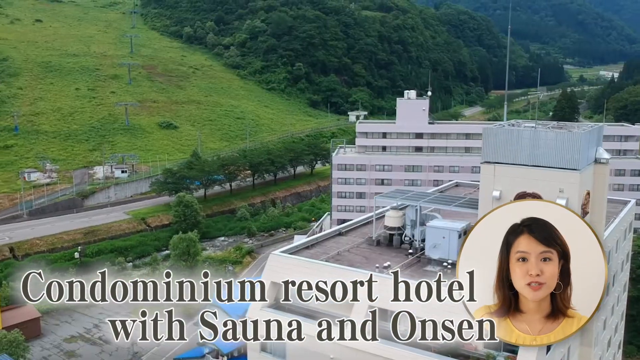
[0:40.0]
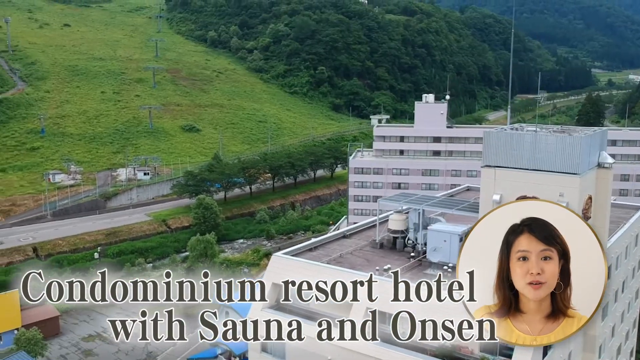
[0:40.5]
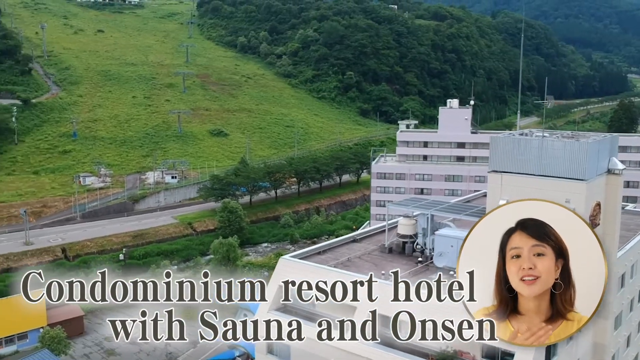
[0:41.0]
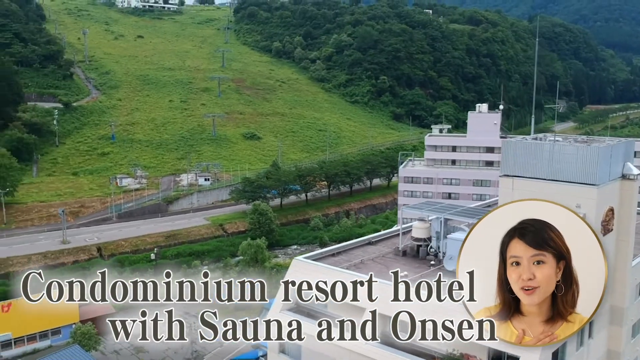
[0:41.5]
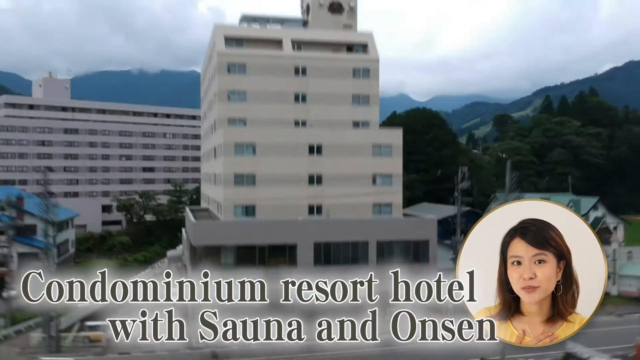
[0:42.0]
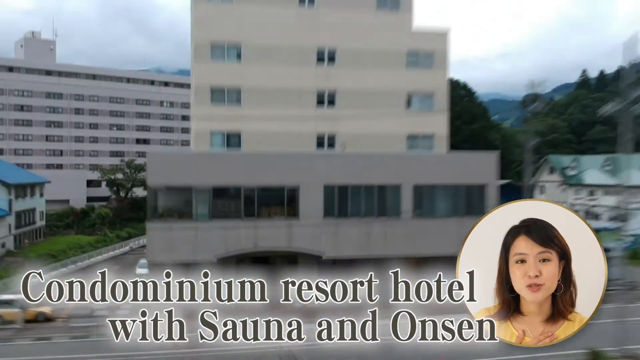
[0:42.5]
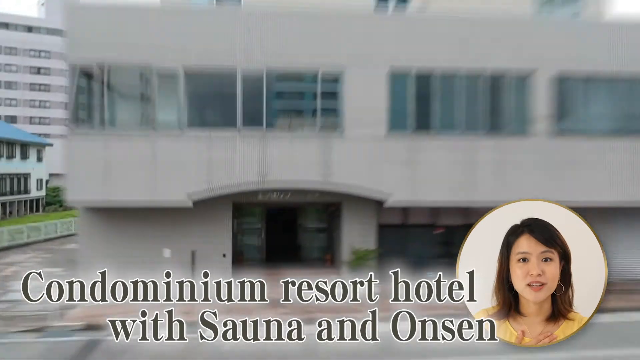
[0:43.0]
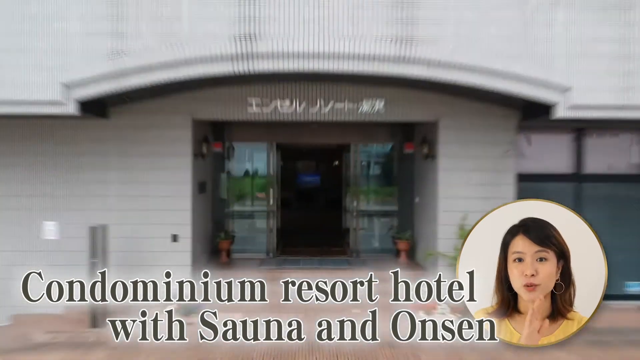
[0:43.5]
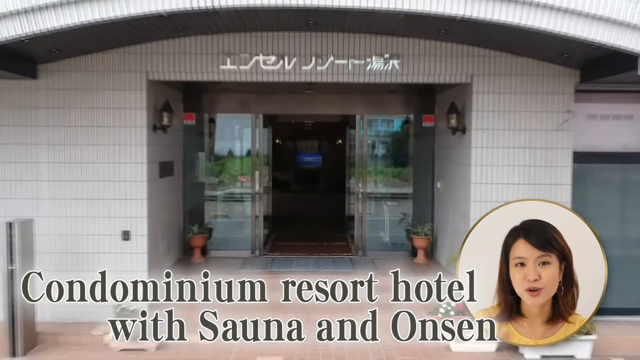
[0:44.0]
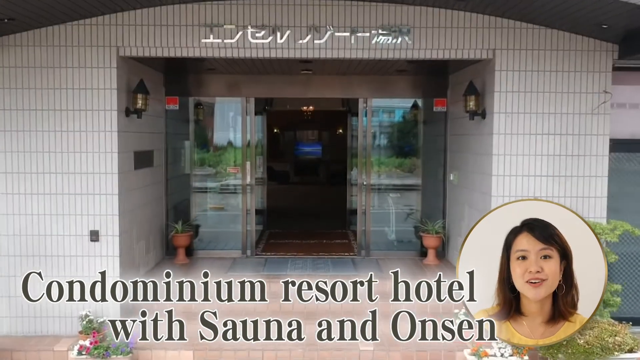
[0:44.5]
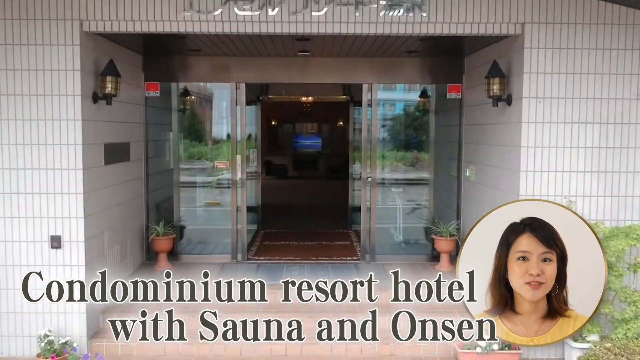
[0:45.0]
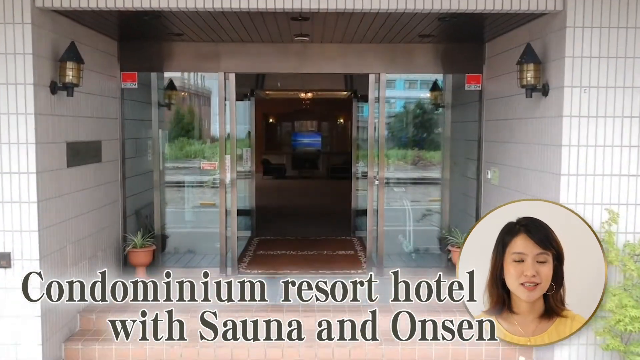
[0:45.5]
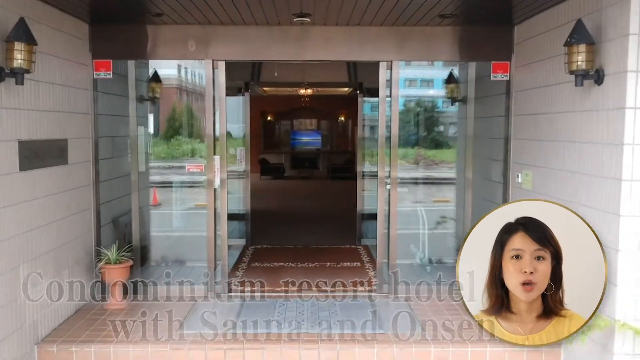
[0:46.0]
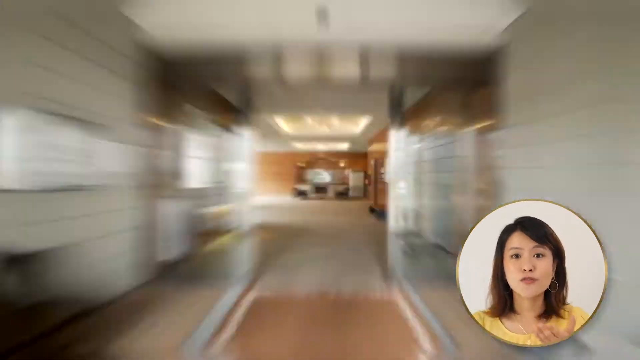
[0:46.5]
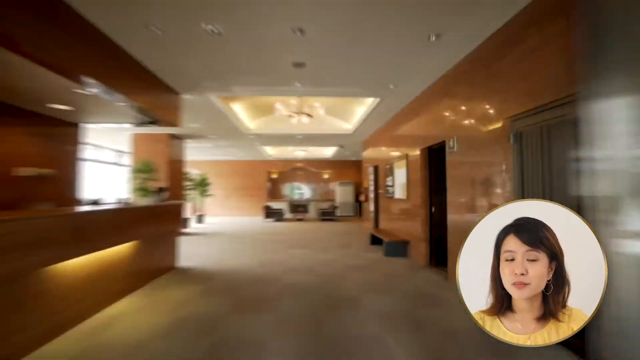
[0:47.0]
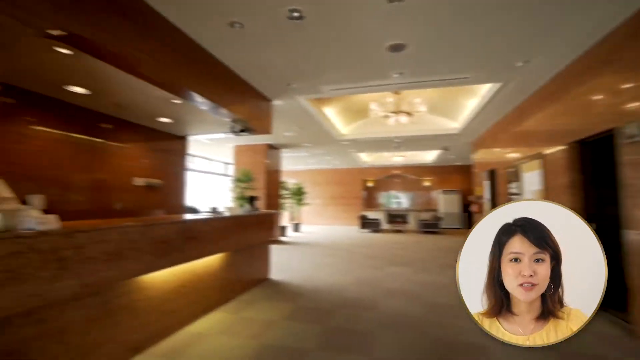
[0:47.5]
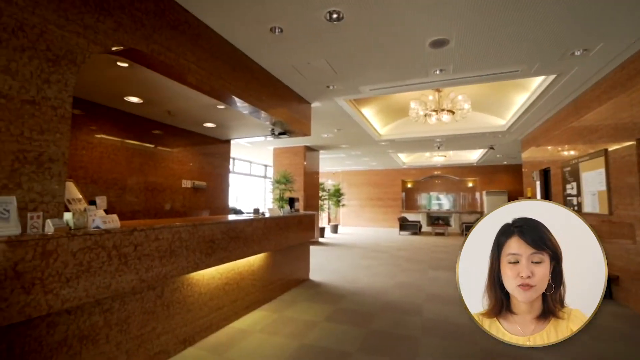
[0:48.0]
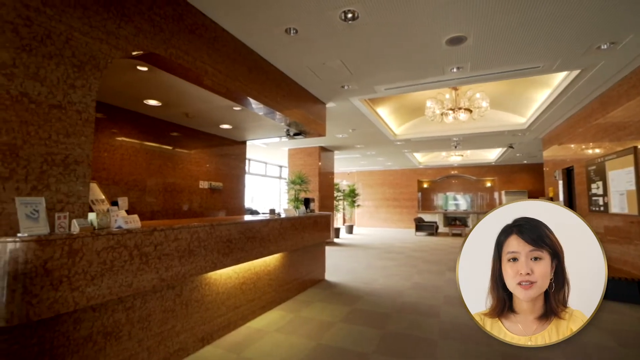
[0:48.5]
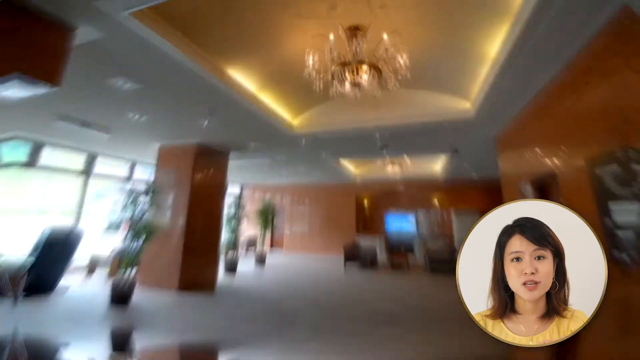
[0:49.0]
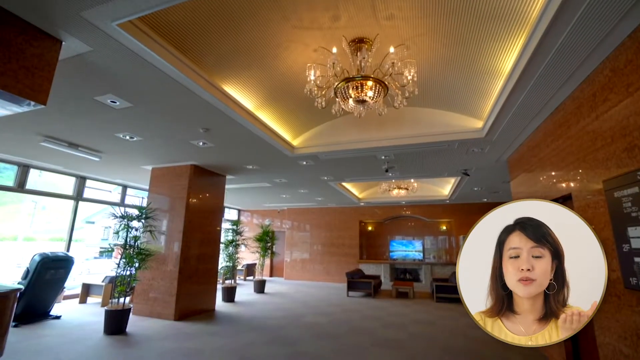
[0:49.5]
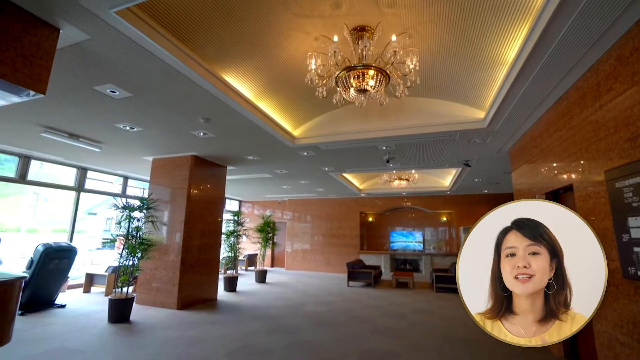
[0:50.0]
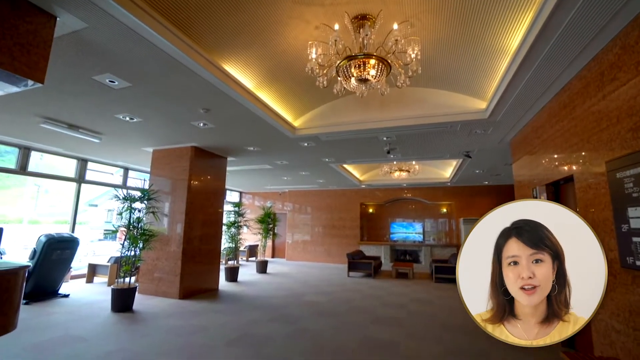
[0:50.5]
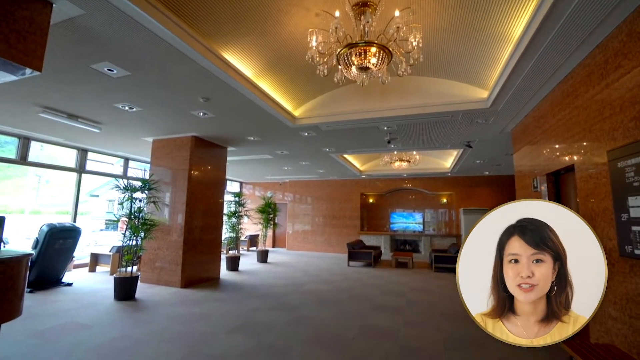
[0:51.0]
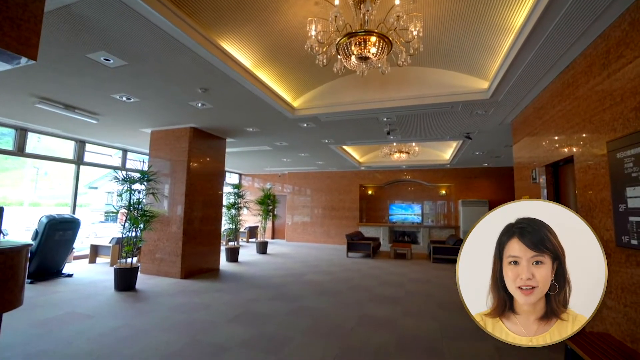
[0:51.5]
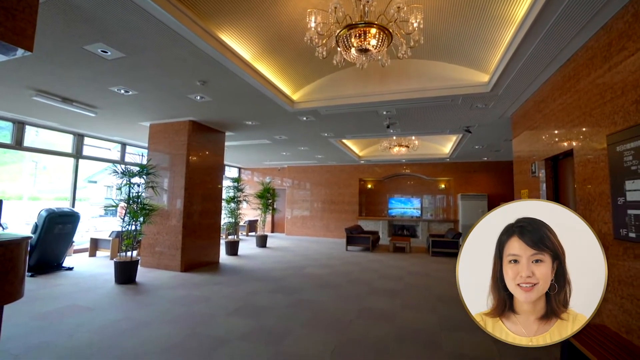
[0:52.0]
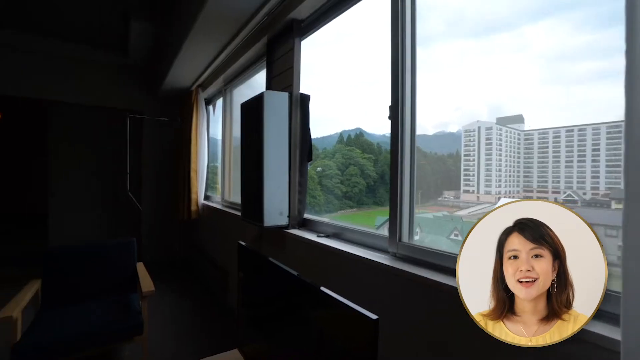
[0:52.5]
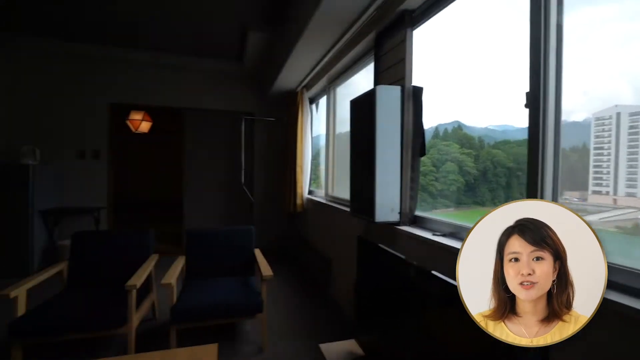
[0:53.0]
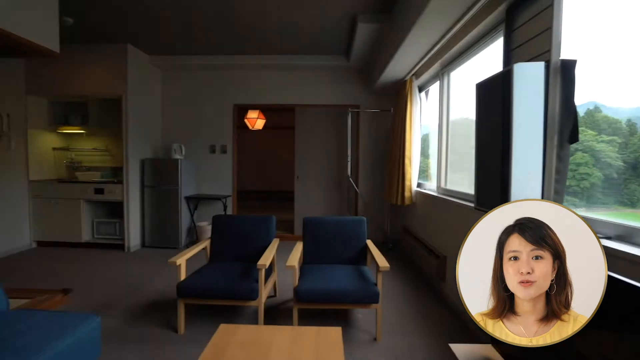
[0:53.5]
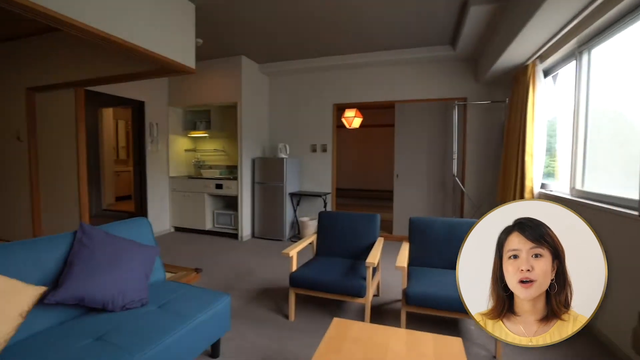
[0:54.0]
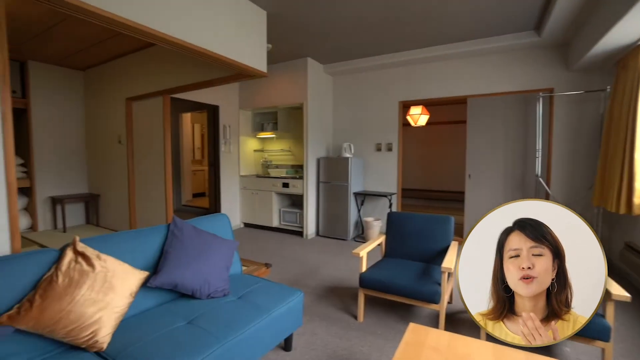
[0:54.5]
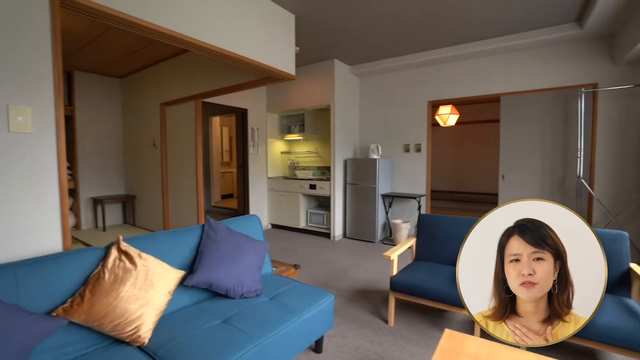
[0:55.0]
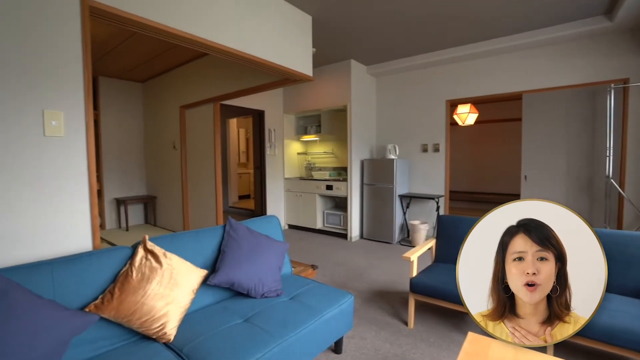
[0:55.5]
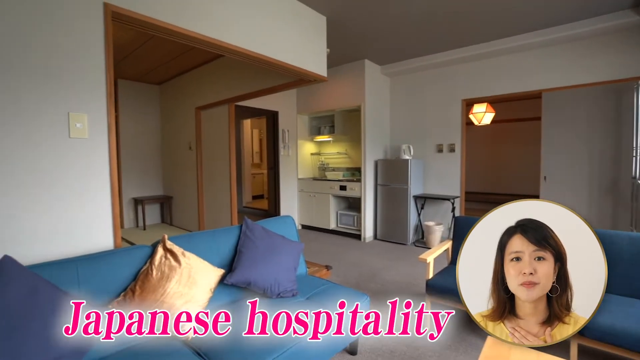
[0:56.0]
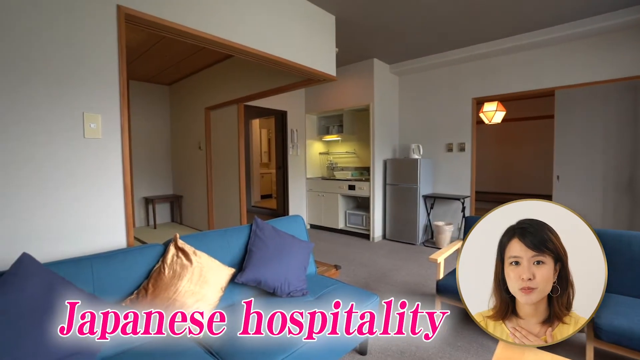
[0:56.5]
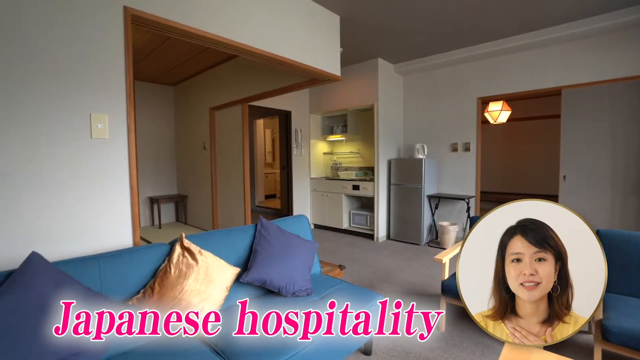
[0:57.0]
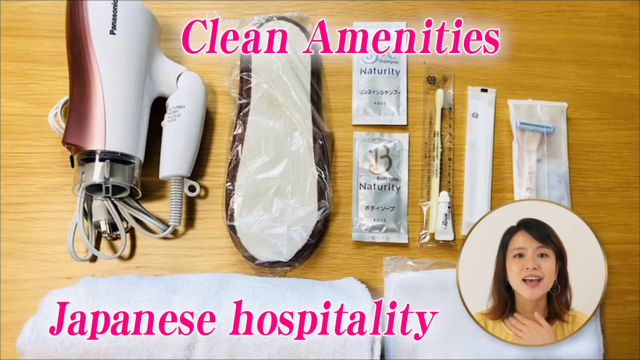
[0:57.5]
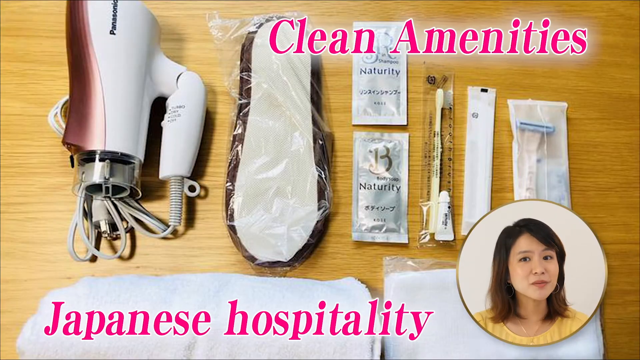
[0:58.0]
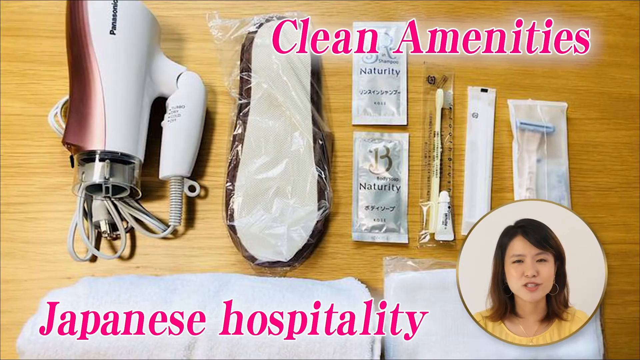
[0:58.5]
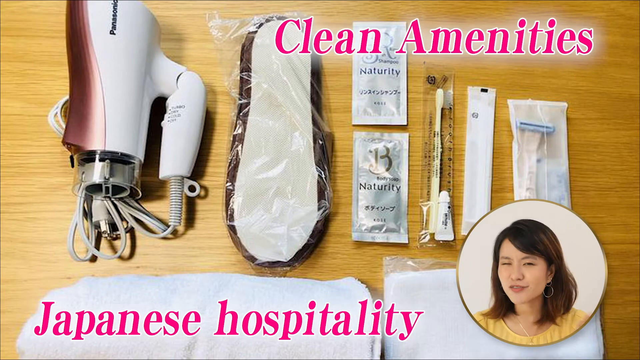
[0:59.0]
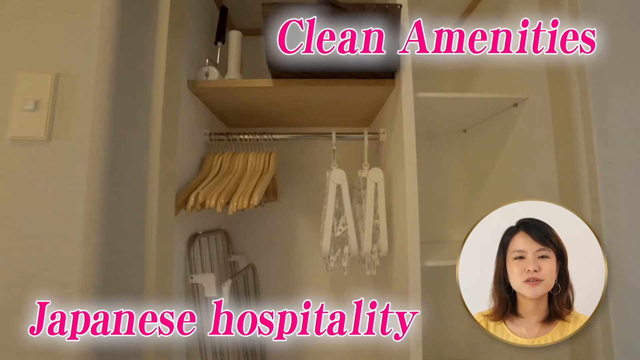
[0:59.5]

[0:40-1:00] Text reads "condominium resort hotel with sauna." The camera moves very rapidly through the front door, showing around the lobby area, and then apparently one of the rooms, which has a closet. The same young woman narrates. The building looks like a high-rise, fairly new and luxury-looking, though not brand new. There is a living room, a small kitchenette, a small refrigerator, and things wrapped in plastic, like toiletries. The outside view is shown again: the building looks like it is in a valley between mountain ranges, and it appears to be an overcast day, somewhat dark and cloudy. The unit seems to have a small living room, a bedroom area, a small kitchenette and a bathroom. The exterior looks a little dingy, as if it could maybe be pressure-washed.